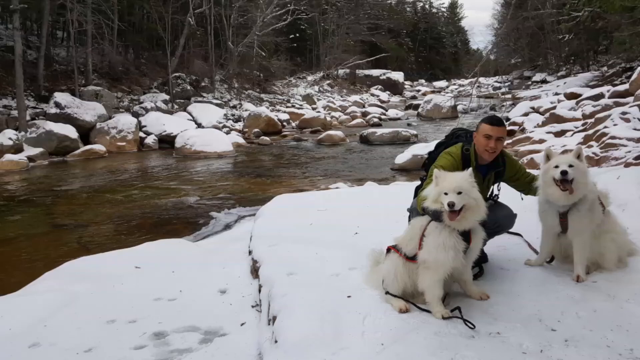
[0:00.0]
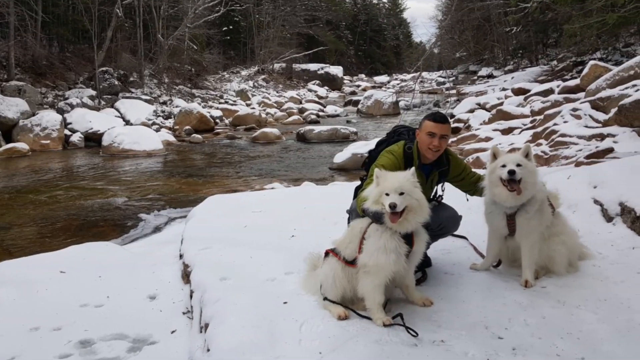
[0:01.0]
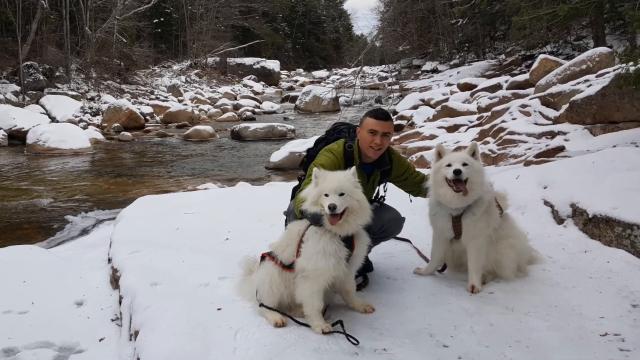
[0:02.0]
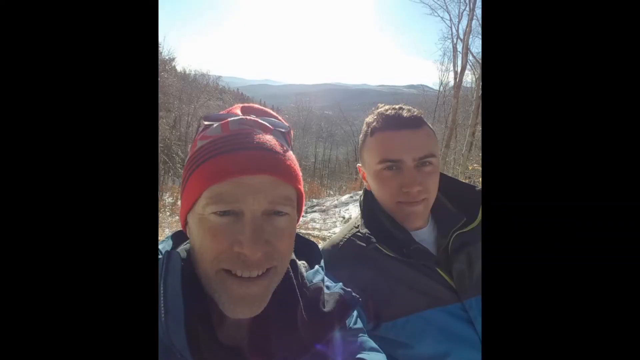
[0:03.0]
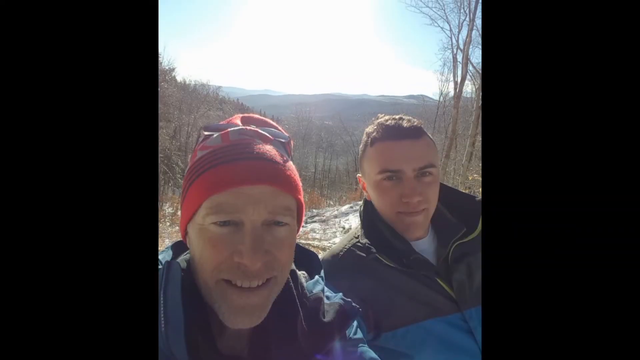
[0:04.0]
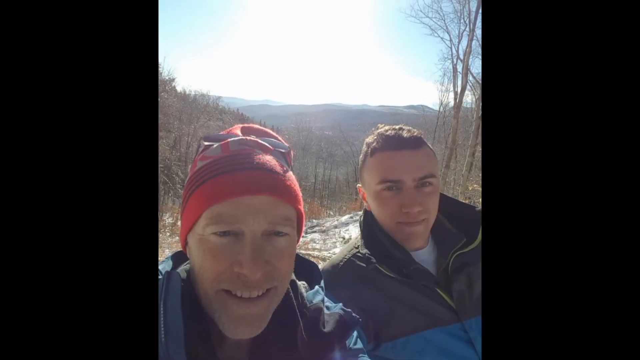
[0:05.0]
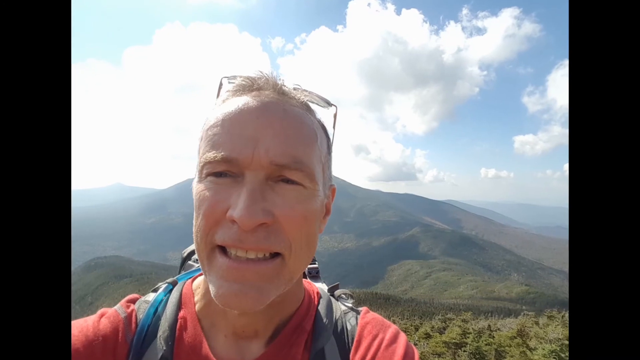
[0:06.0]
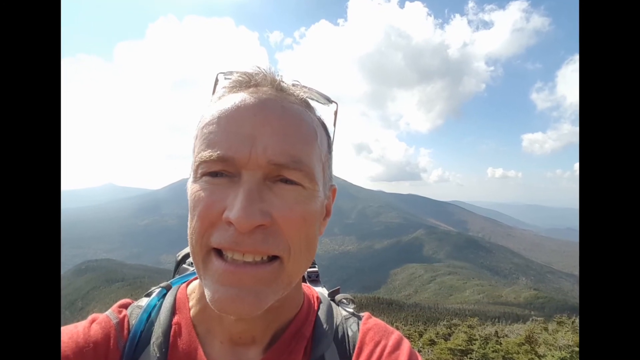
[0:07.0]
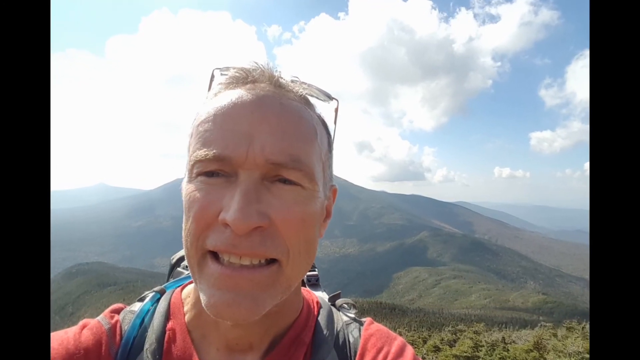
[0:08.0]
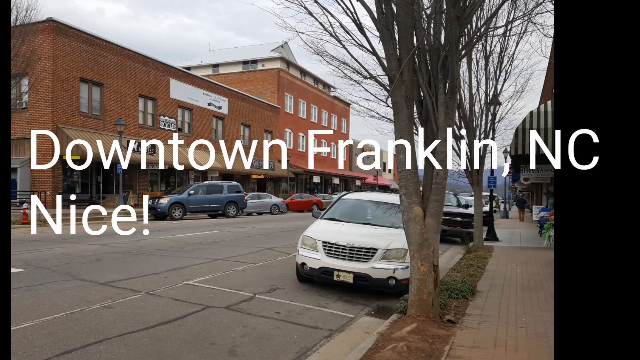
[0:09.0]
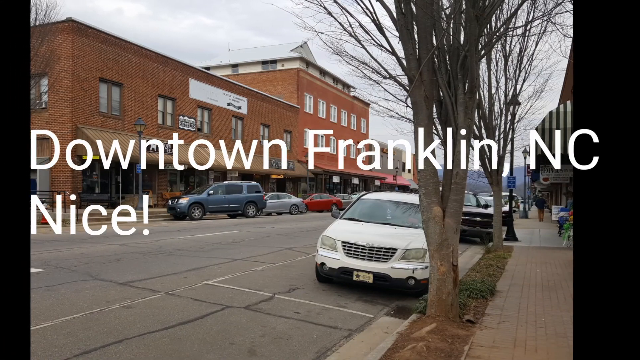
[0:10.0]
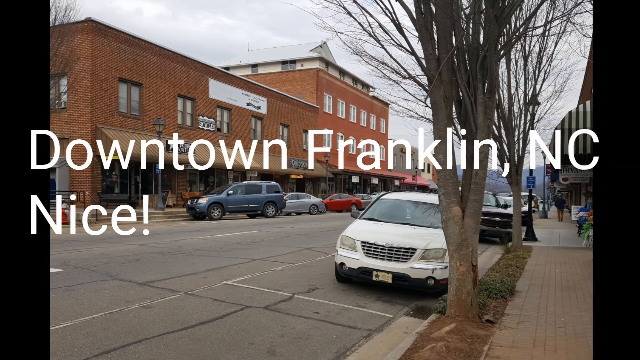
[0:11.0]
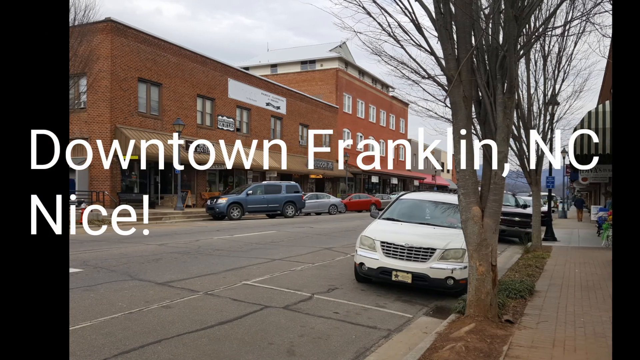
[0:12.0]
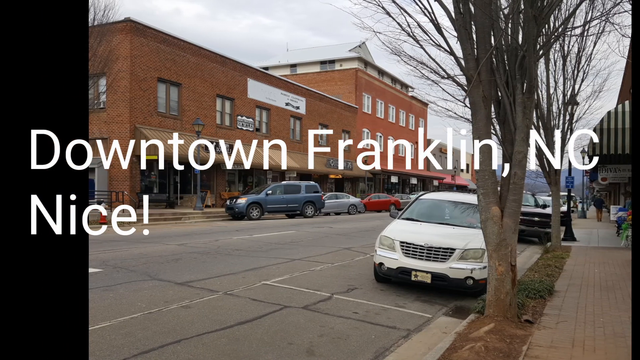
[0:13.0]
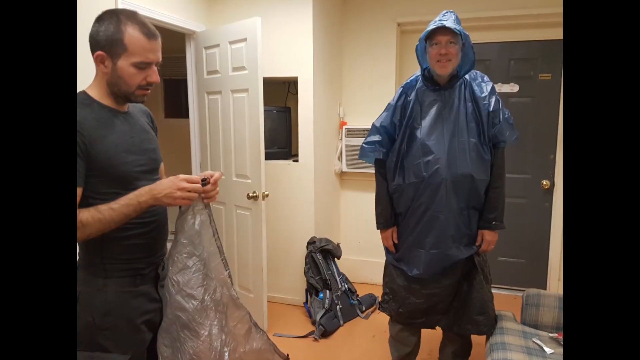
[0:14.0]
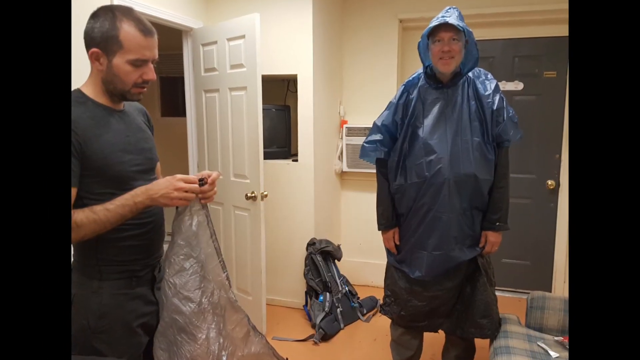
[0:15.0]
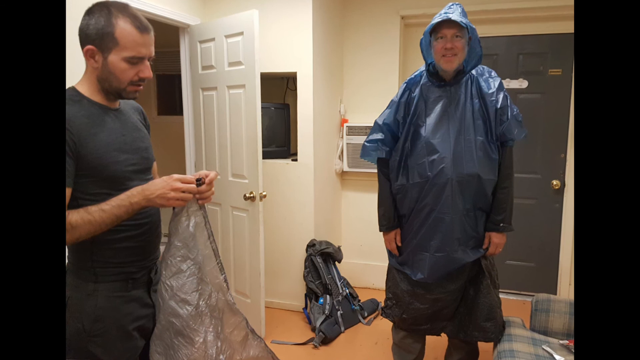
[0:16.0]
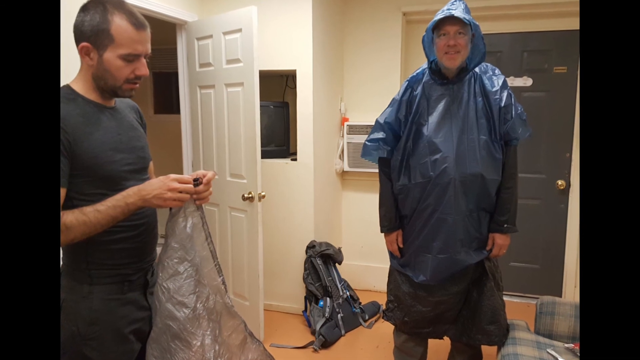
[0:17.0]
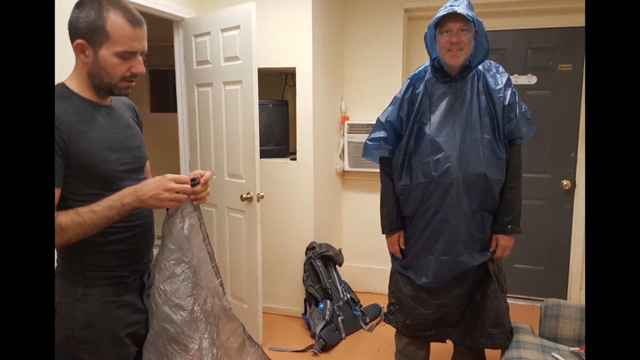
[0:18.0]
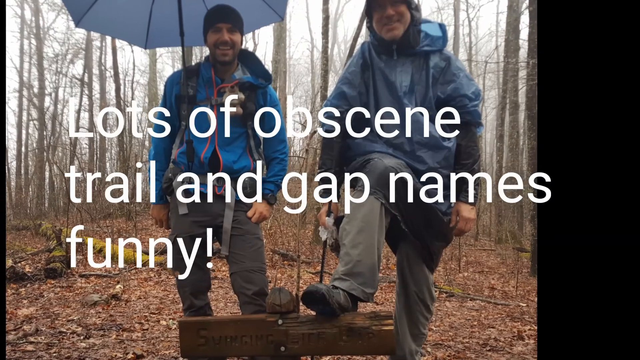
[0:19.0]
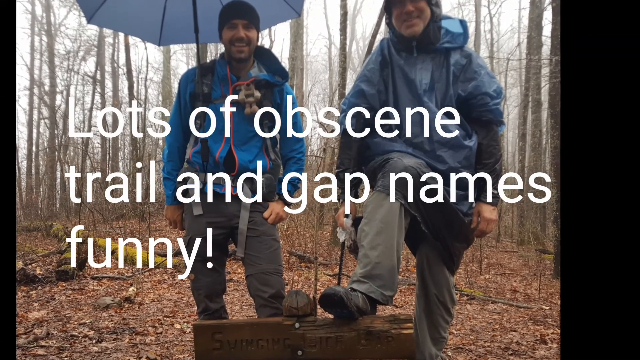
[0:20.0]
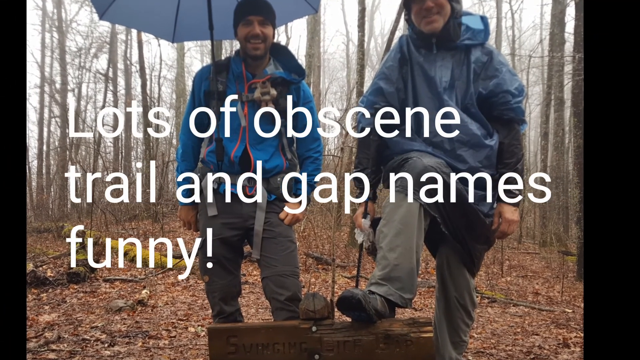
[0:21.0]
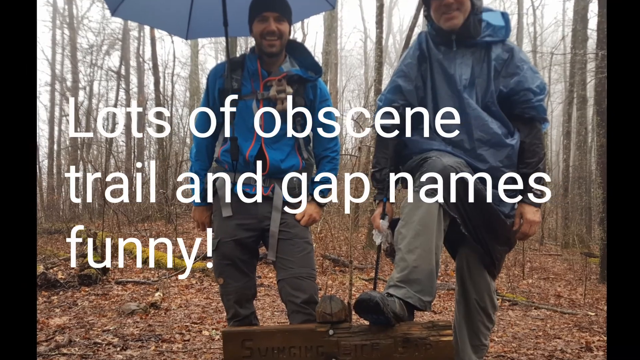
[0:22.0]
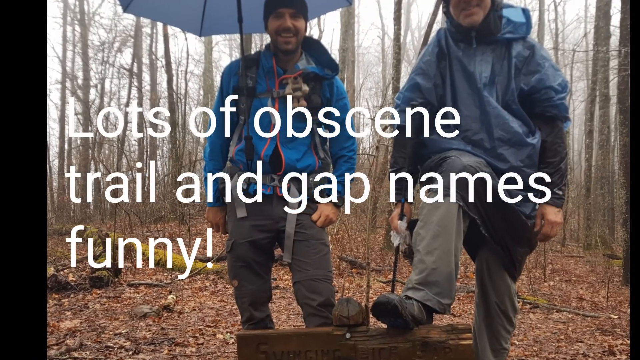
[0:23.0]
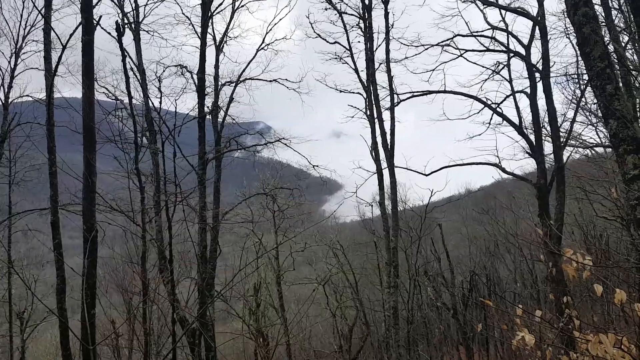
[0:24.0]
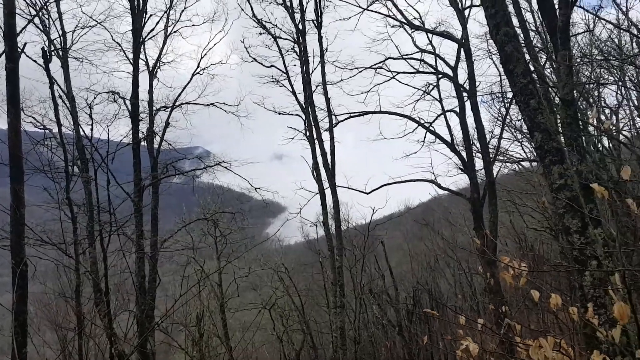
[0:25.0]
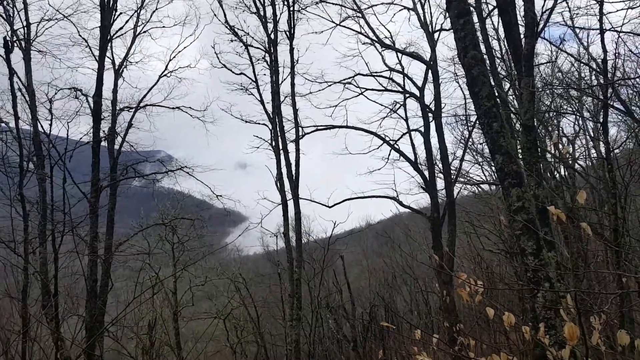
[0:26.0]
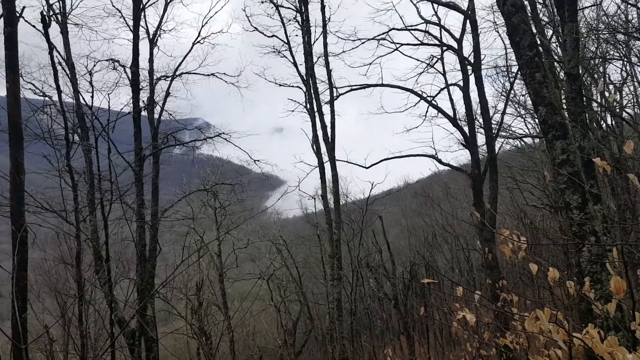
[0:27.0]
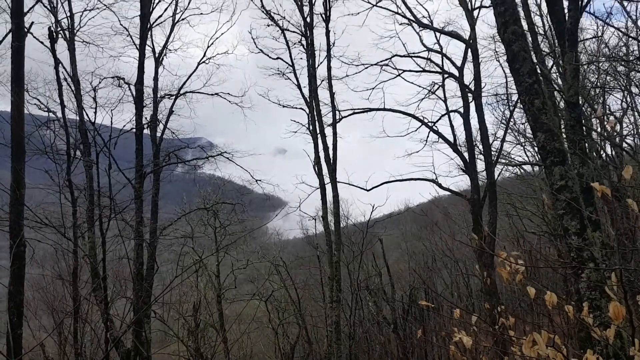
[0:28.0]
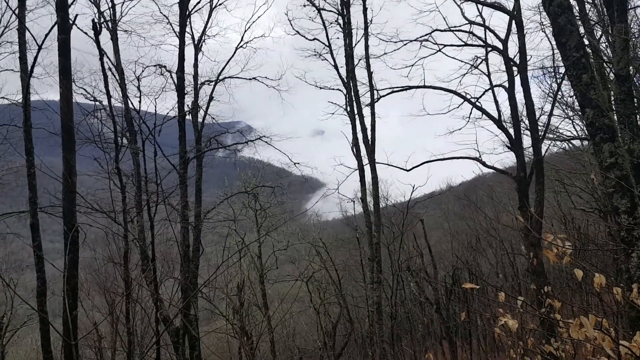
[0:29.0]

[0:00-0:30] A man appears with two white dogs, in what looks like a collage of pictures. The scene then moves to downtown Franklin, North Carolina, and there are many trail and gap names. The video seems to be the start of a travelogue or hiking blog showing photos from a hike. It opens with the two white dogs and the hiker, then shows a man and an older man, followed by another picture of the older man in front of mountains. They appear to be hiking a trail in North Carolina and going into downtown Franklin.